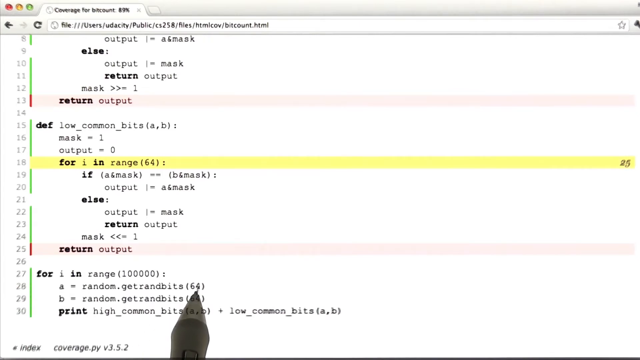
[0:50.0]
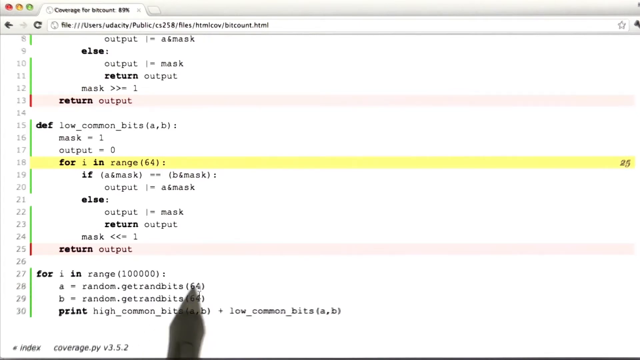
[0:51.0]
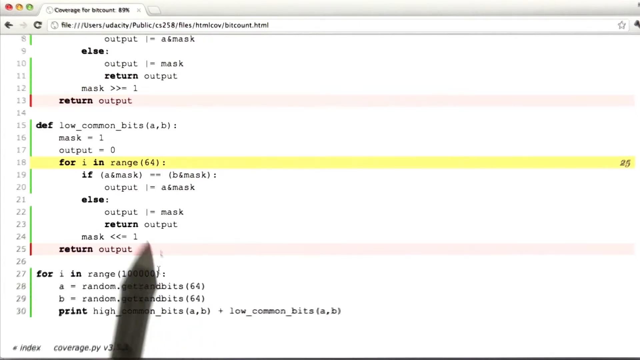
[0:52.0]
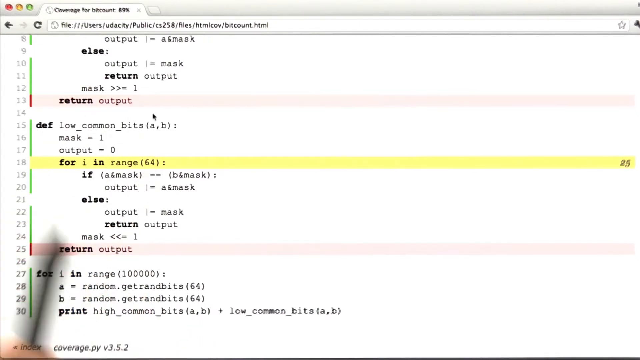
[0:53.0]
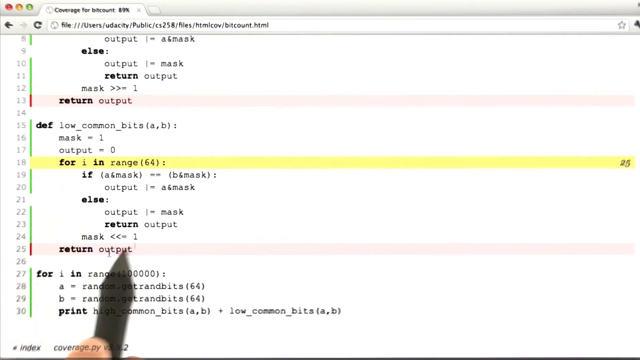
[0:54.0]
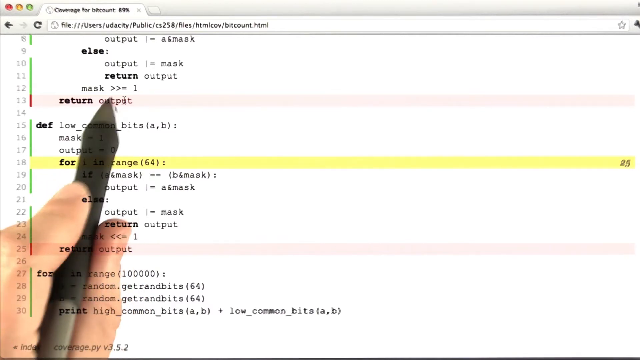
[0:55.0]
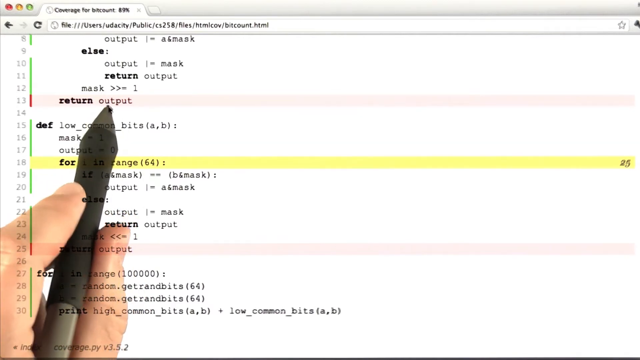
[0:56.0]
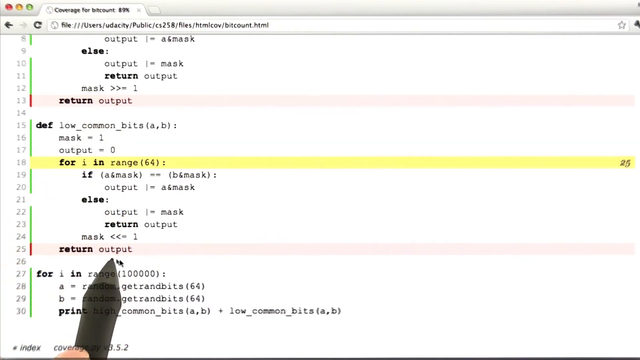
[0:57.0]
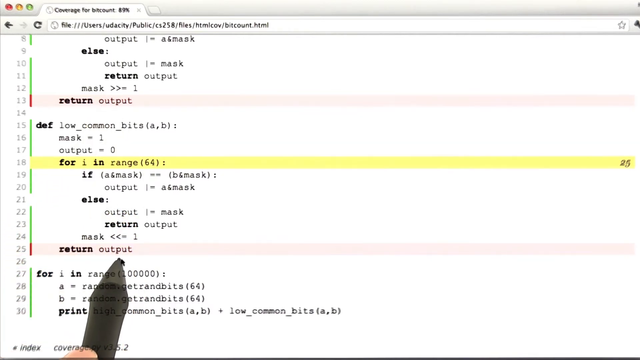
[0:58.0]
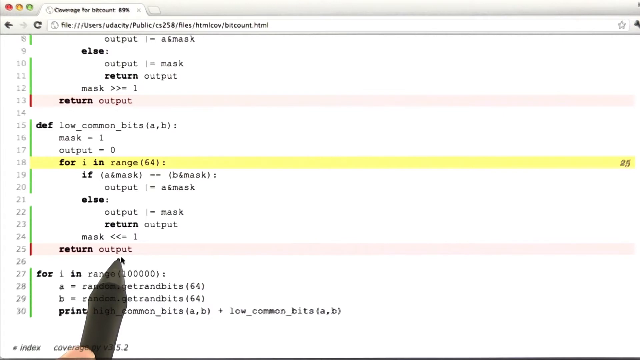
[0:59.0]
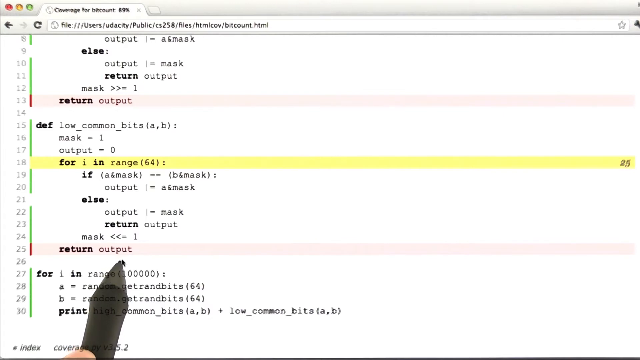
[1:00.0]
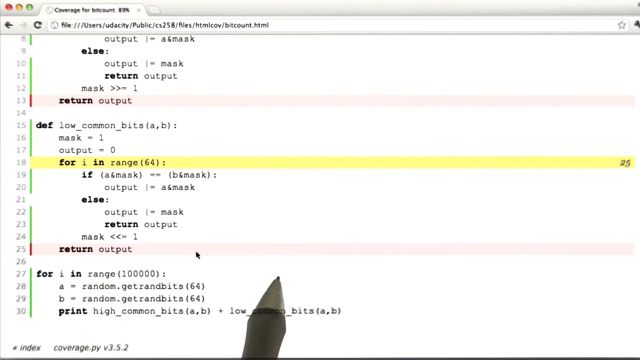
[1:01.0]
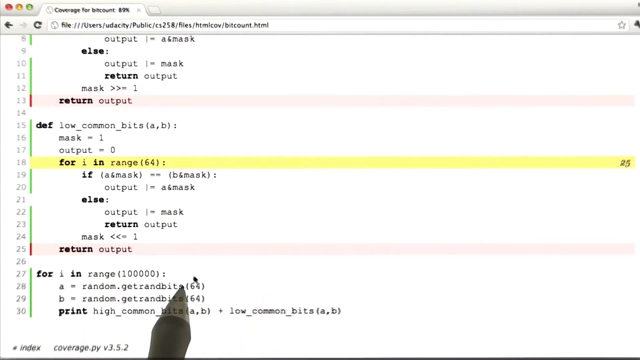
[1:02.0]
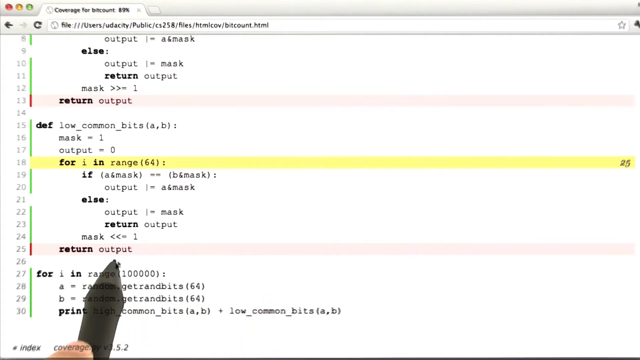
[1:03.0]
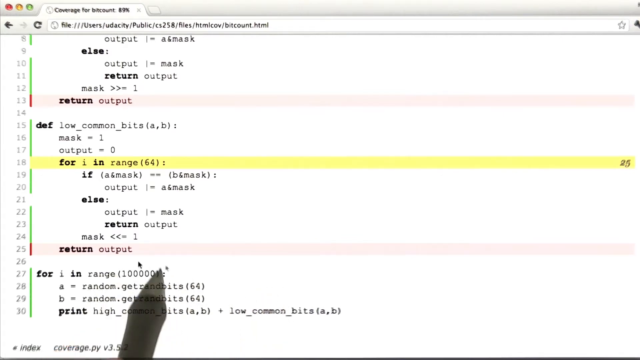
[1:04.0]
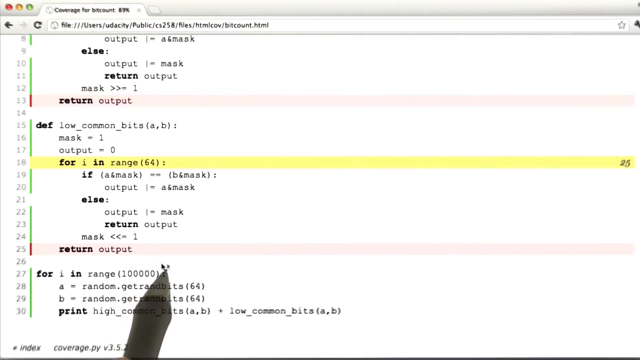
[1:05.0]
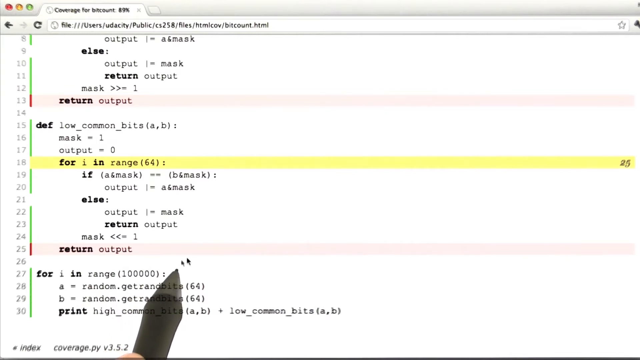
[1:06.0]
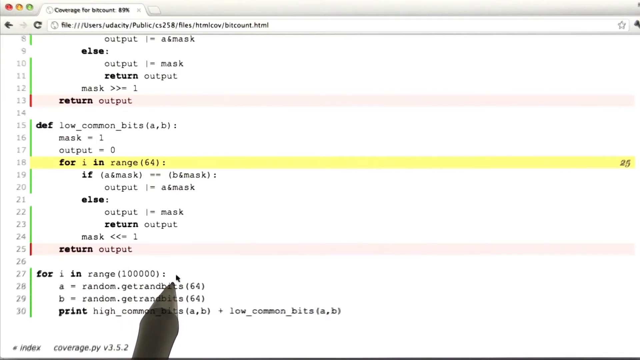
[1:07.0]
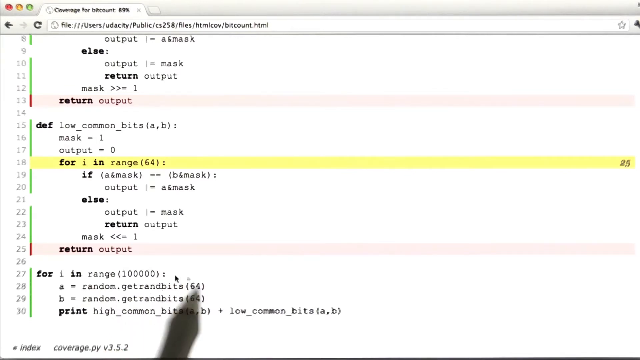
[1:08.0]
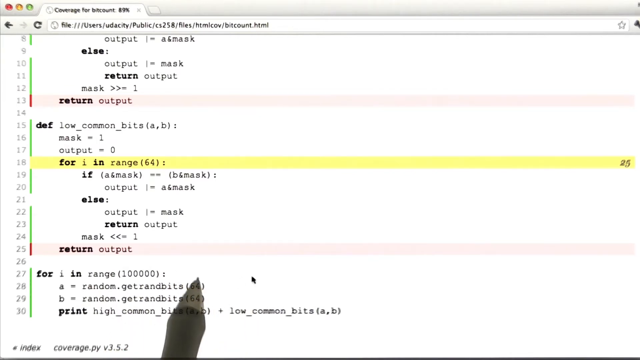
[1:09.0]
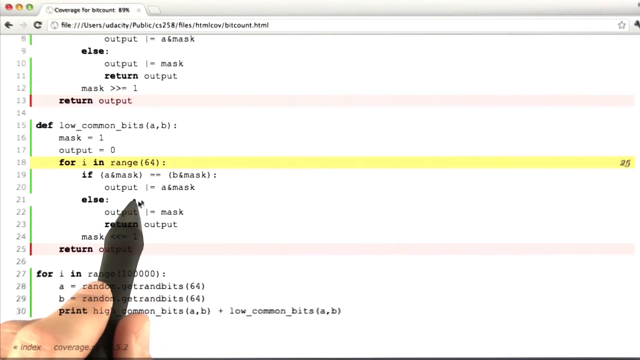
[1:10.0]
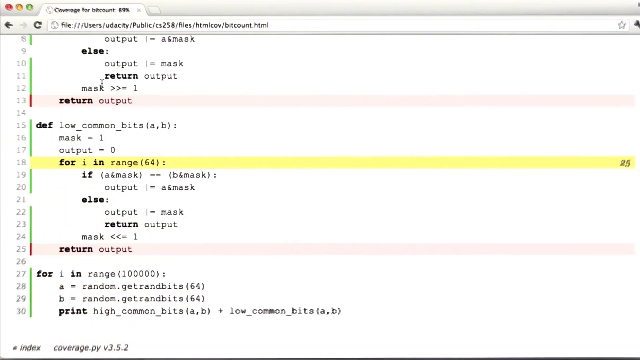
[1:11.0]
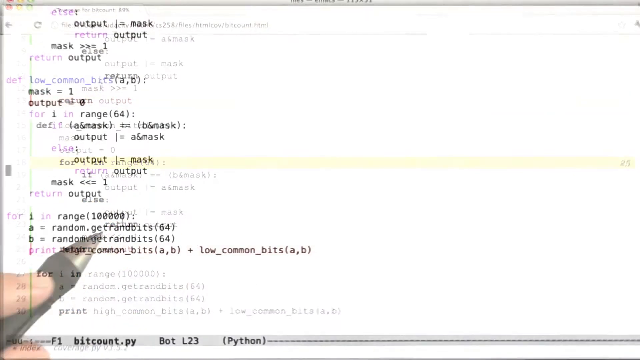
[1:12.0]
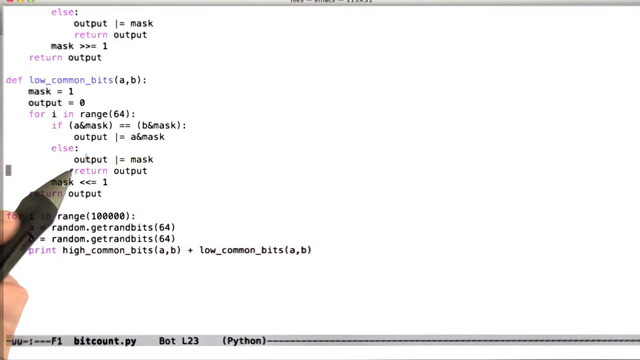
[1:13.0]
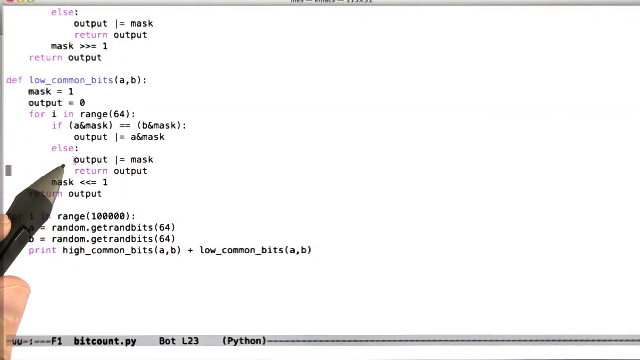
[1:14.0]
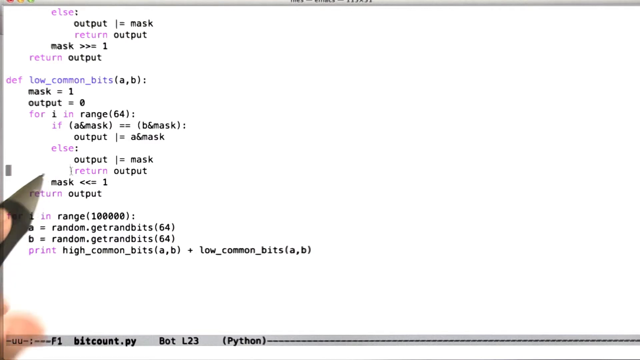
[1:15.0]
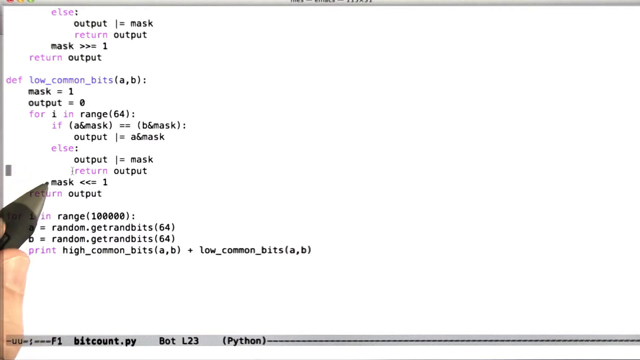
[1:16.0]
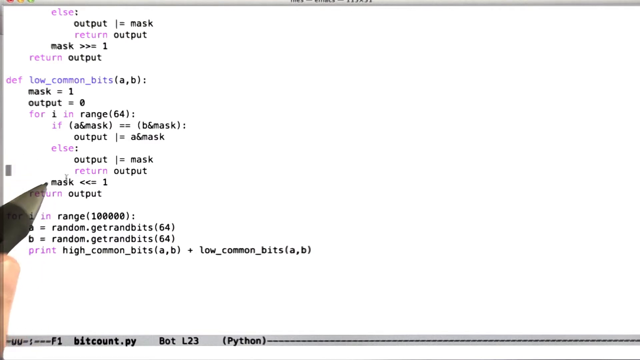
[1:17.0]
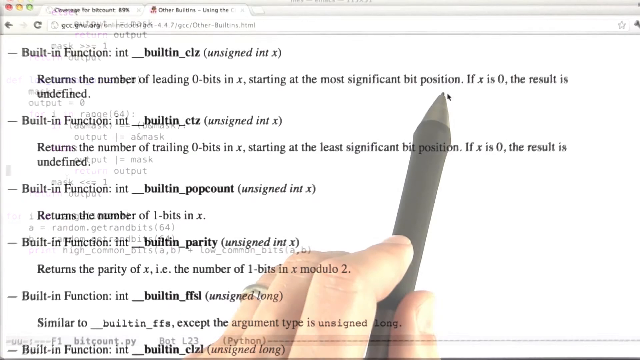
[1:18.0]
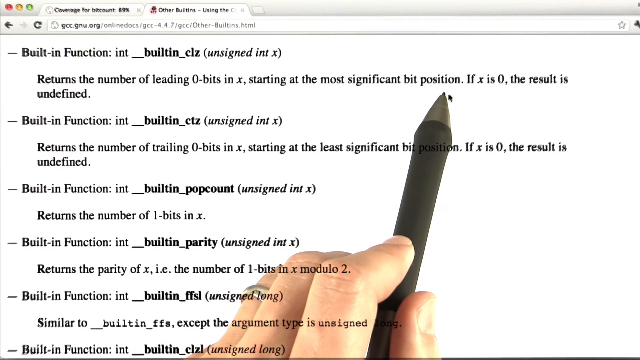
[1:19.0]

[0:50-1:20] A computer screen shows HTML code down the entire screen, with a pen stylus and the instructor's hand moving over it. The lines of code are numbered on the left, starting with 8, 9, 10, 11, 12, 13, 14 and so on. The code is from a public folder, bitcount.html. Using the stylus, the instructor highlights line 10, making imaginary circles around the word "output" and the number 64, continuously moving the stylus cursor around without making any markings; he is just showing things. The view changes to the next screen, where the highlight pen shows code, then to a different screen with more code, and then back to the original screen, which shows code including "else", "return output" and "in range 64". Someone is evidently instructing on HTML code.